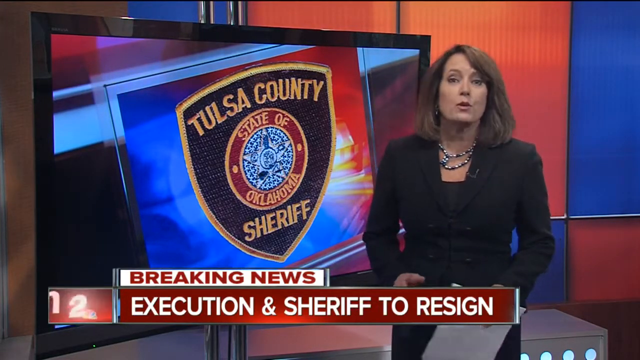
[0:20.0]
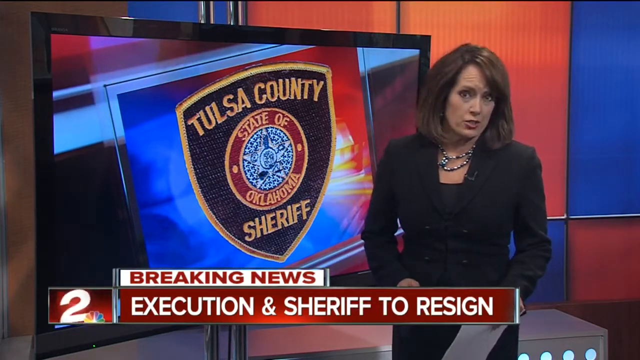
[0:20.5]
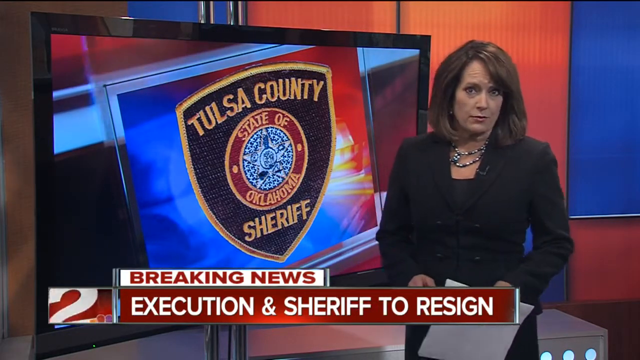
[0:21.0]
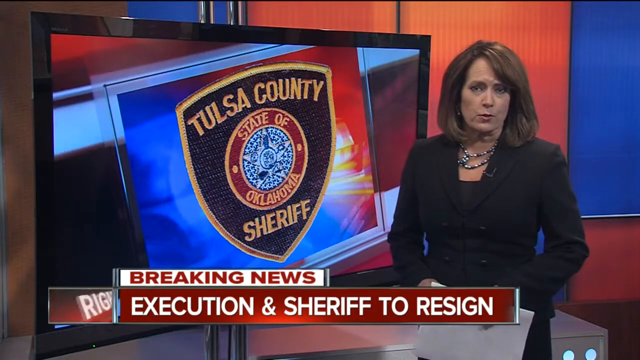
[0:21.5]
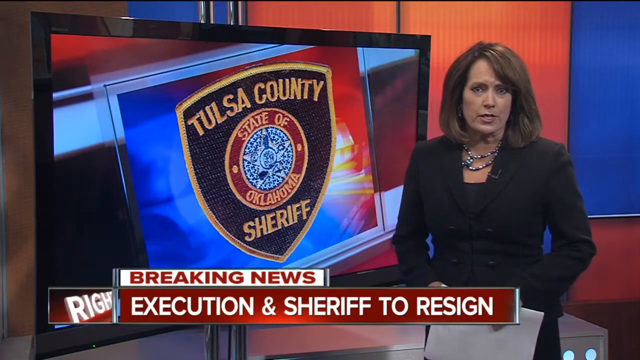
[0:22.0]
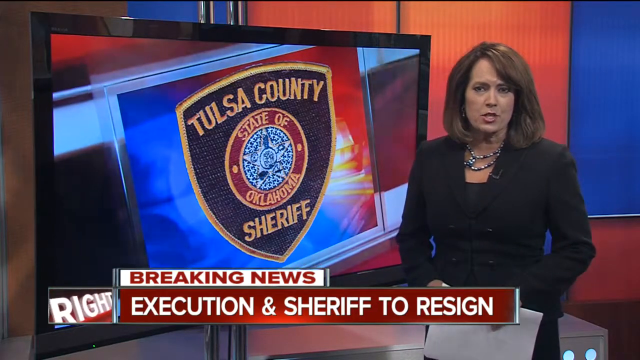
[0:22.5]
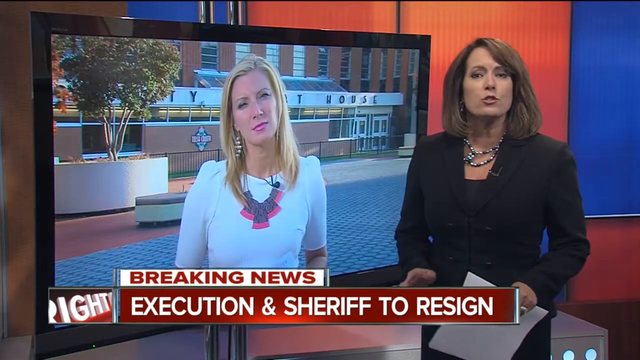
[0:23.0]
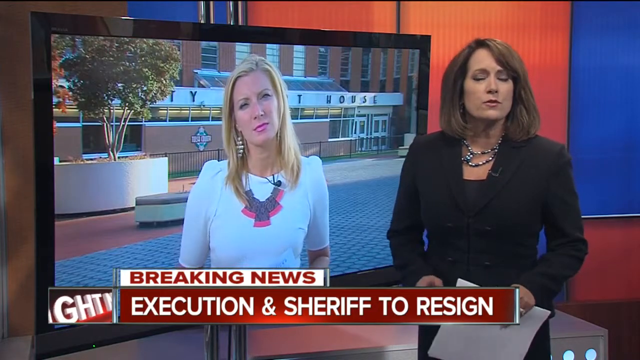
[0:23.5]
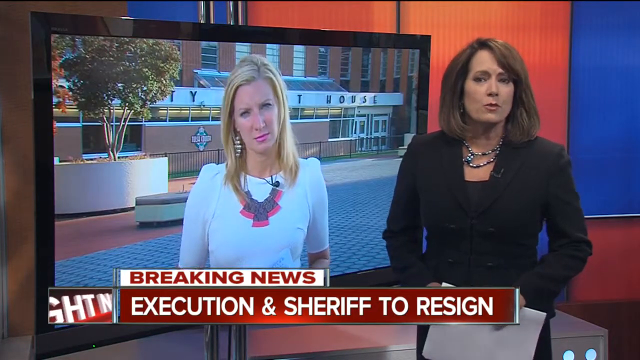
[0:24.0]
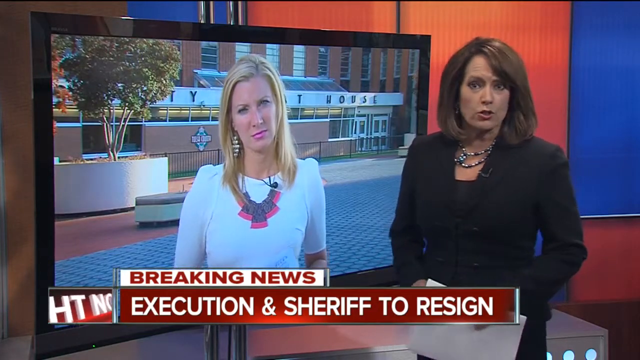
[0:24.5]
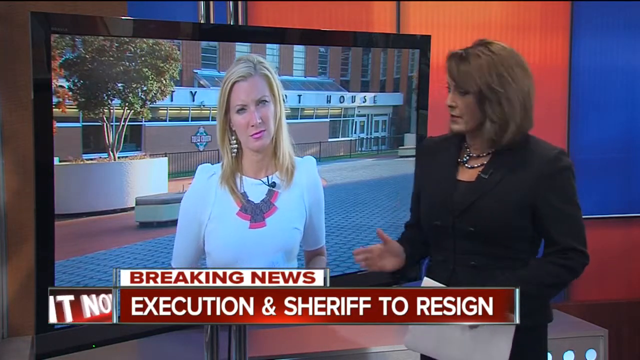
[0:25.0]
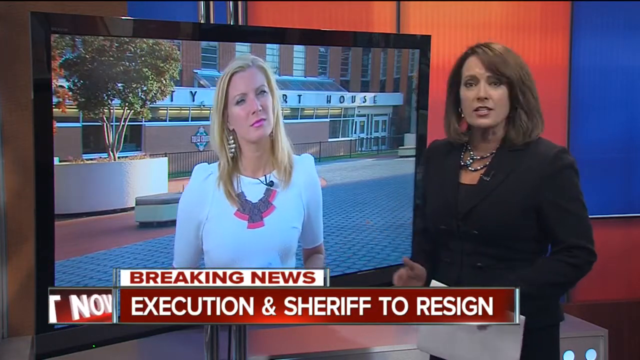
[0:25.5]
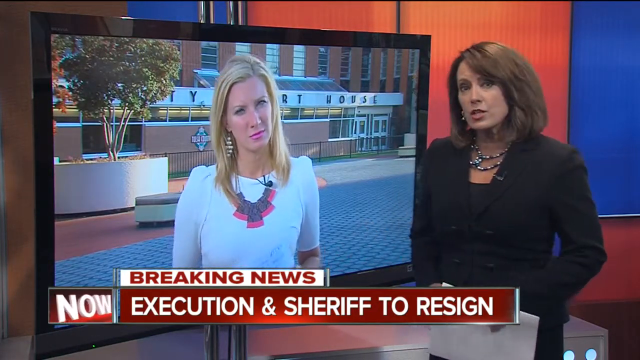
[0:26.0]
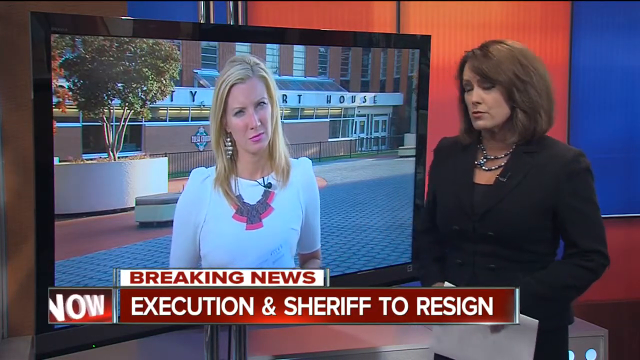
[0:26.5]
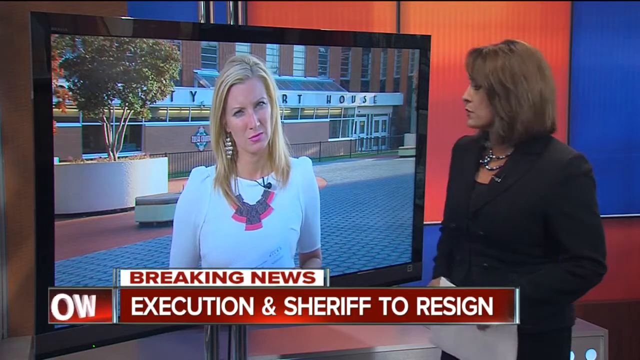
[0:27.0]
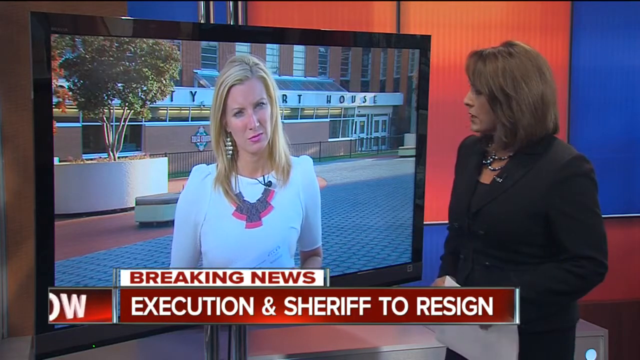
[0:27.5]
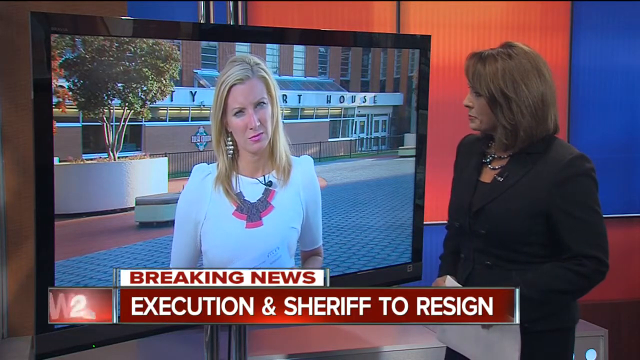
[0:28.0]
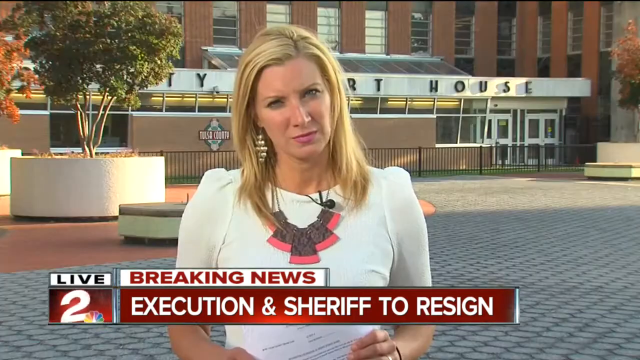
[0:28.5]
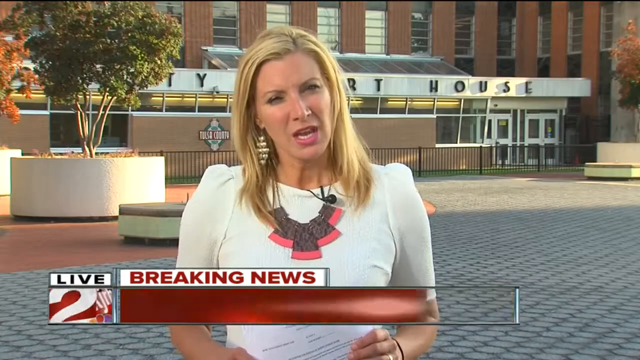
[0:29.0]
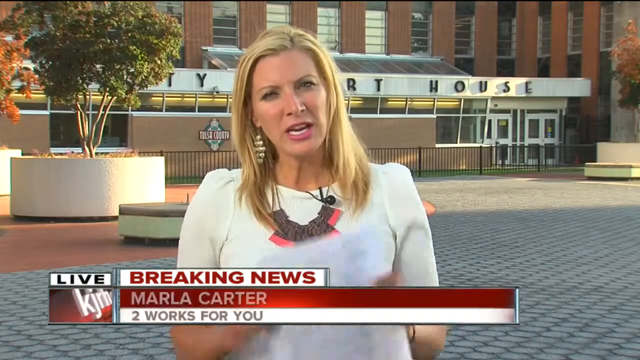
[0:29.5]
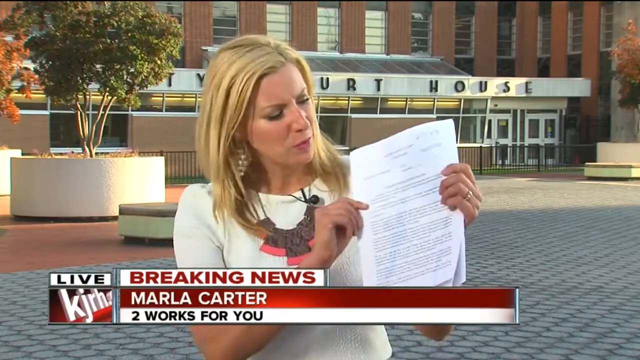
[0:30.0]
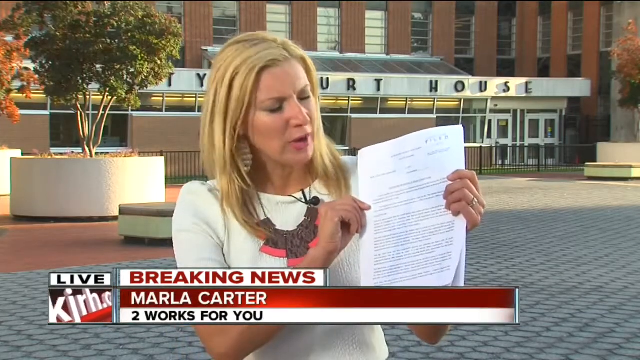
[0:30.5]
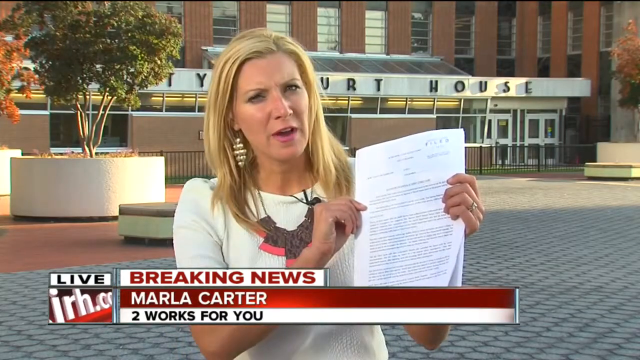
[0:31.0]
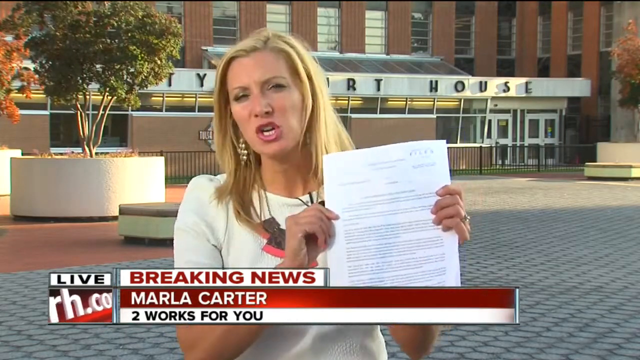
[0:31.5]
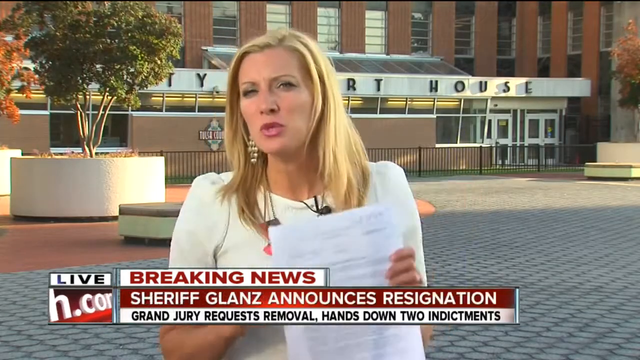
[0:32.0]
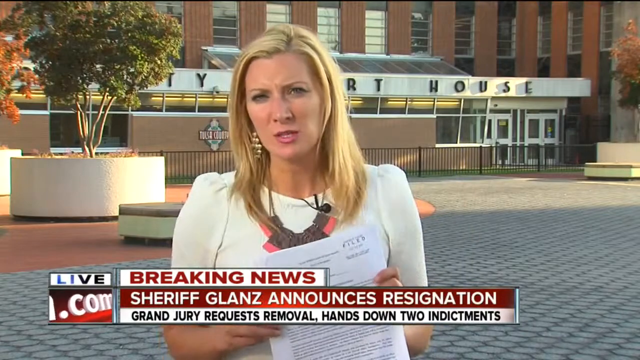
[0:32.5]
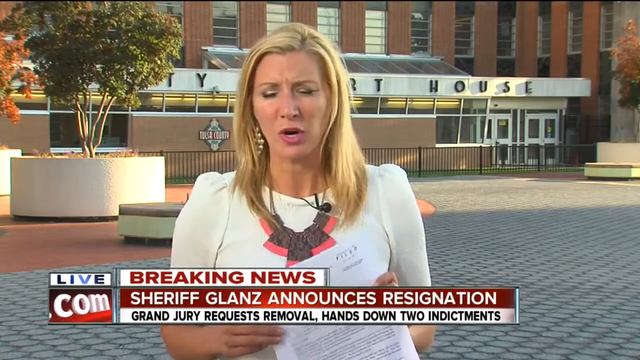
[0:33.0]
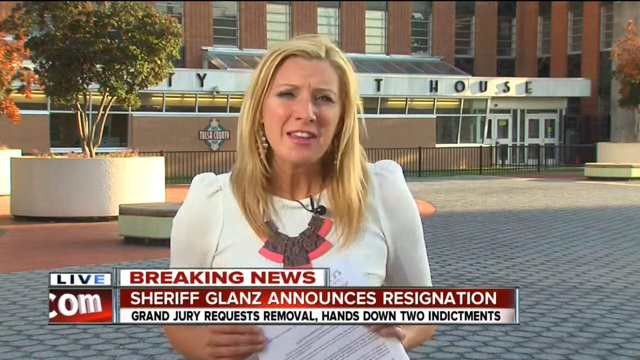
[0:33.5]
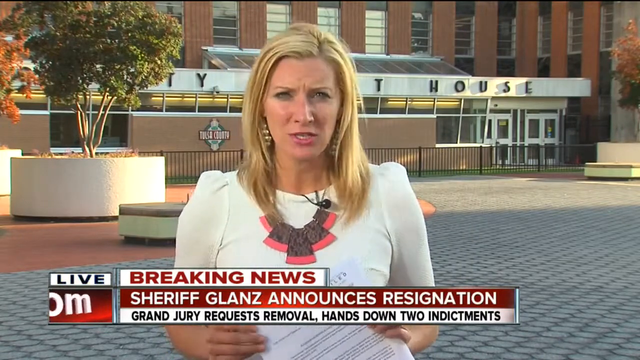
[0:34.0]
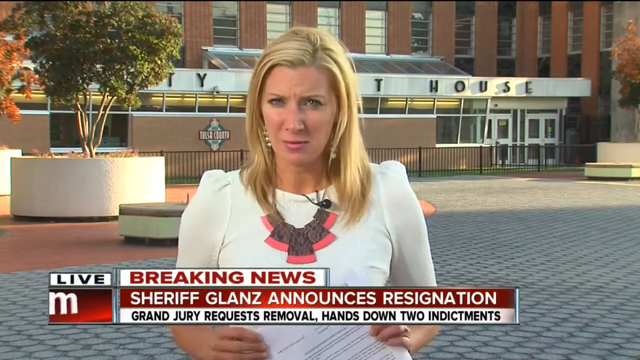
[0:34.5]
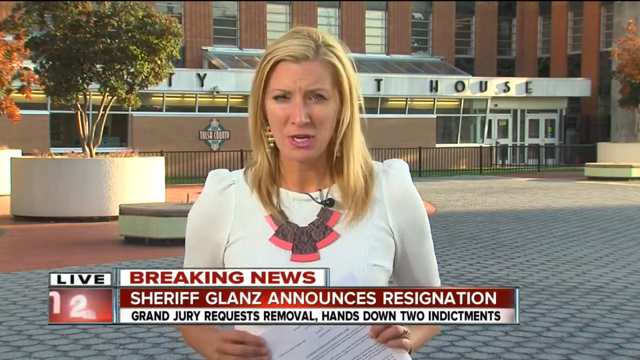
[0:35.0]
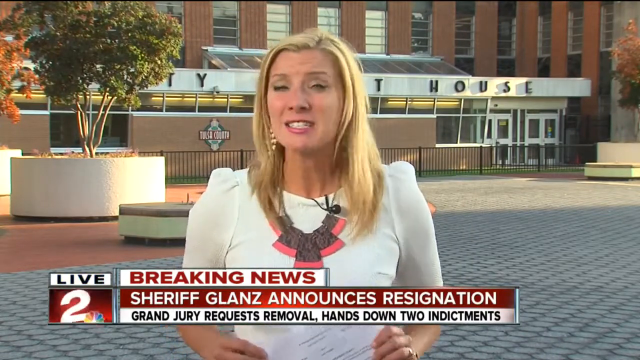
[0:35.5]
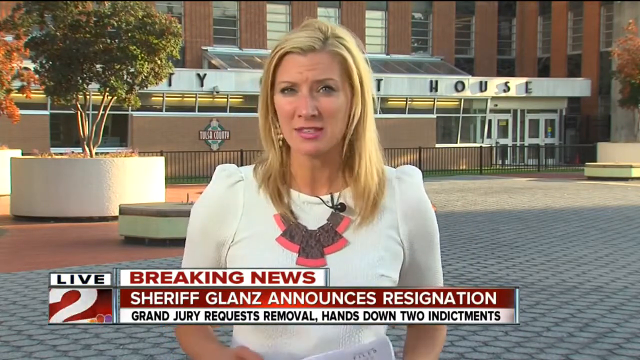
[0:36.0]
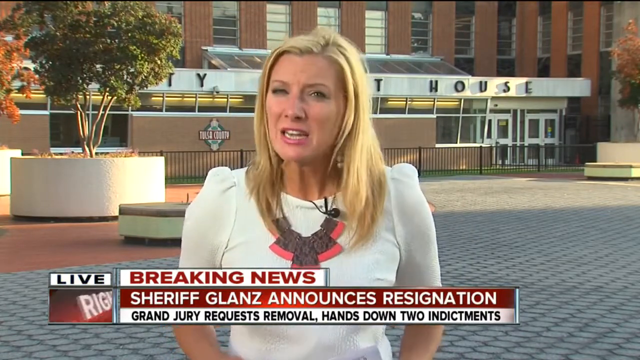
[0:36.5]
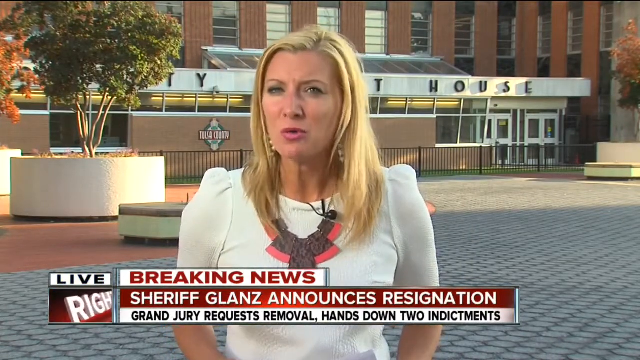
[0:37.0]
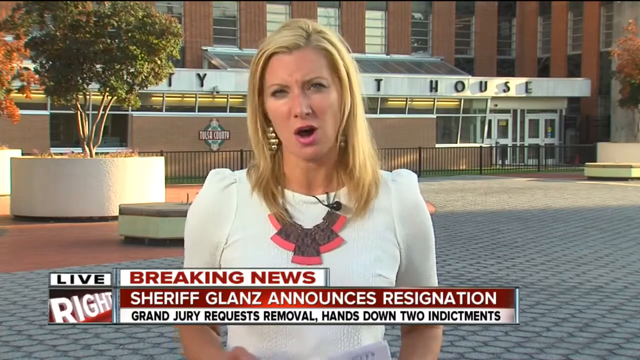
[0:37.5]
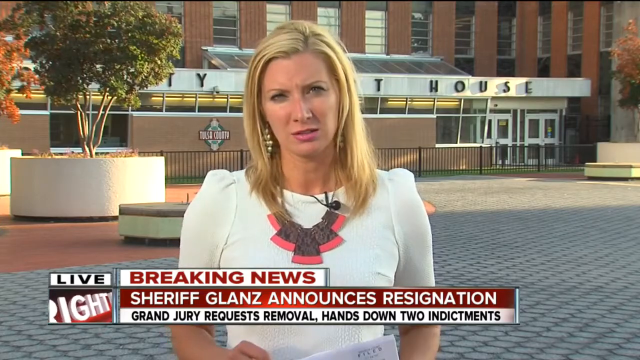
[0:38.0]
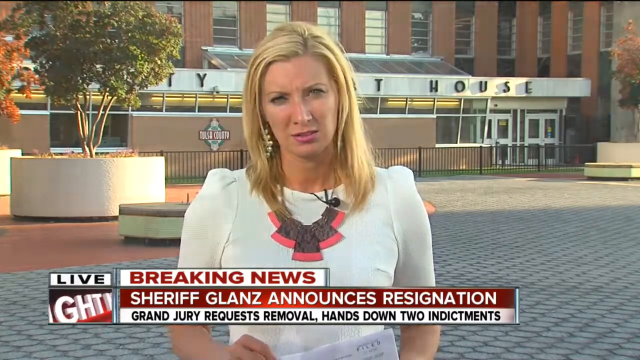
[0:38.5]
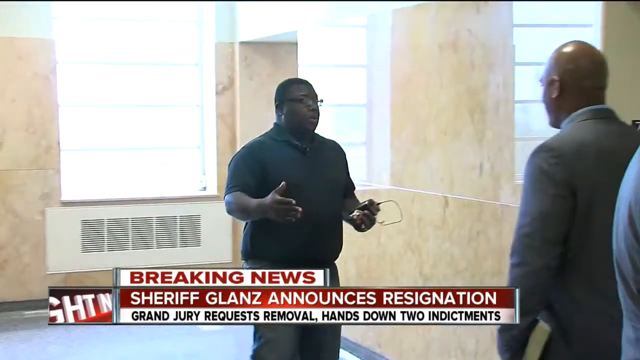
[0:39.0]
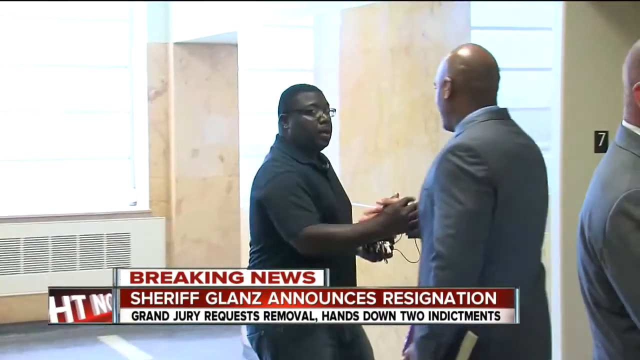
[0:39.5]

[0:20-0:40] Karen Larson stands before a large television screen showing a badge that reads "Tulsa County Sheriff State of Oklahoma," looking directly toward the camera. The screen behind her then shows a white female with shoulder-length blonde hair, a white shirt, pink lipstick and large earrings. Karen looks toward the screen, and the video transitions live to the blonde-haired female, Marla Carter, who stands in front of the courthouse building holding a few pieces of white paper with black writing on them. Marla looks at the camera, speaking, with text indicating "Sheriff Glanz announces resignation," "grand jury requests removal," "hands down two indictments." The video then transitions to two black males shaking hands. One, a short black male in his early thirties, wears a short-sleeved black shirt, gray pants and black glasses; he extends his right hand to shake hands with a bald black male in a gray suit jacket and a white collared button shirt. They stand inside a building where a lot of sunlight comes in through a window, in front of a wall showing the number 7.